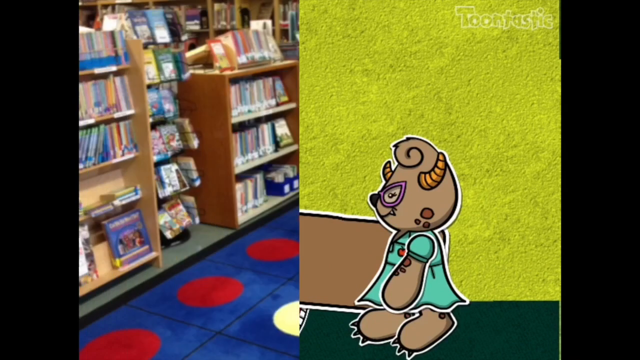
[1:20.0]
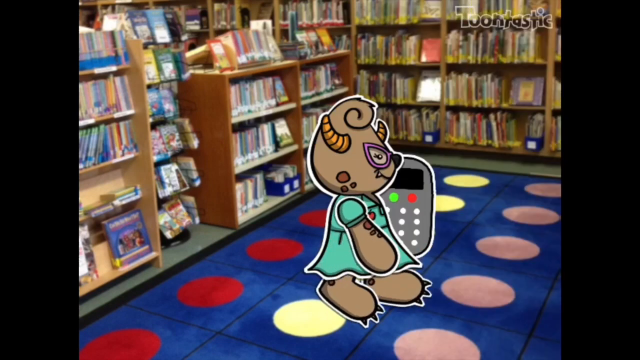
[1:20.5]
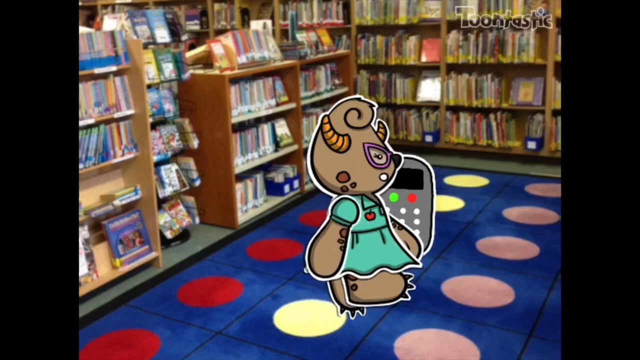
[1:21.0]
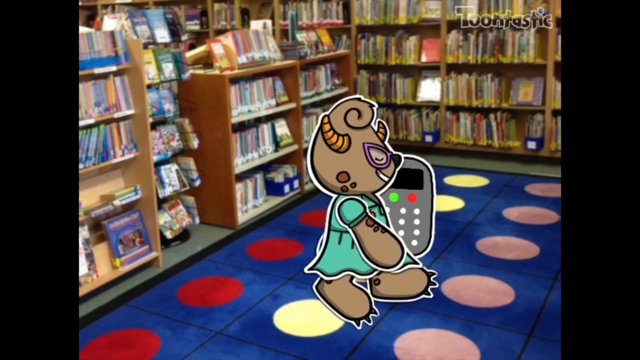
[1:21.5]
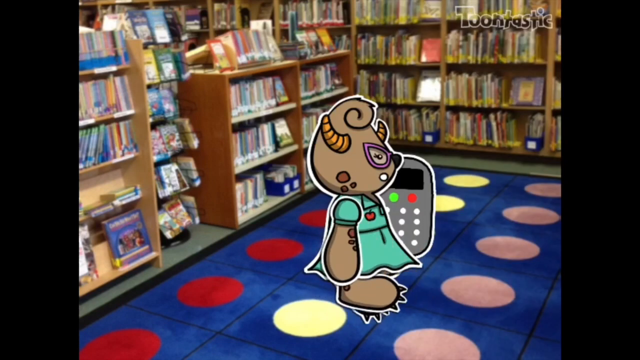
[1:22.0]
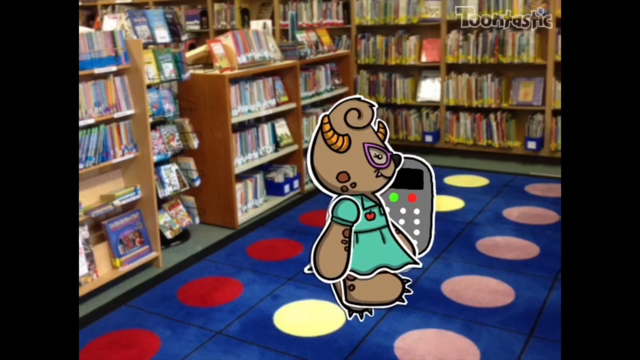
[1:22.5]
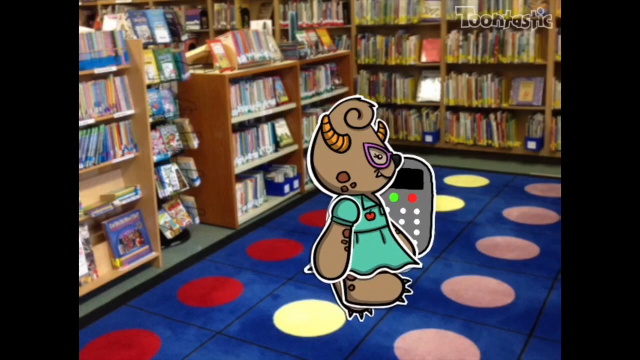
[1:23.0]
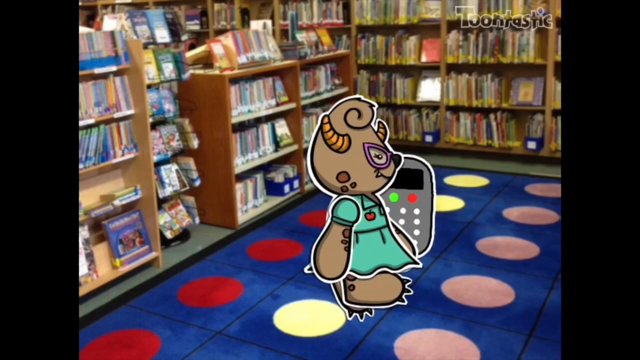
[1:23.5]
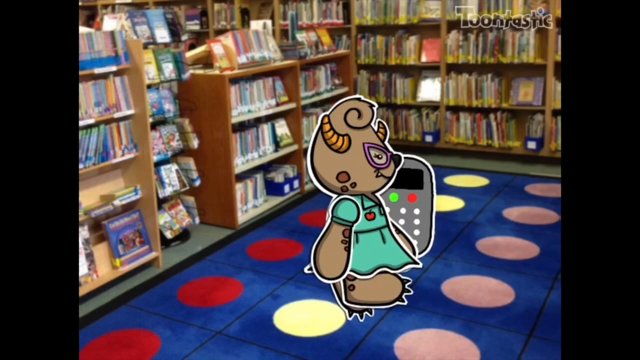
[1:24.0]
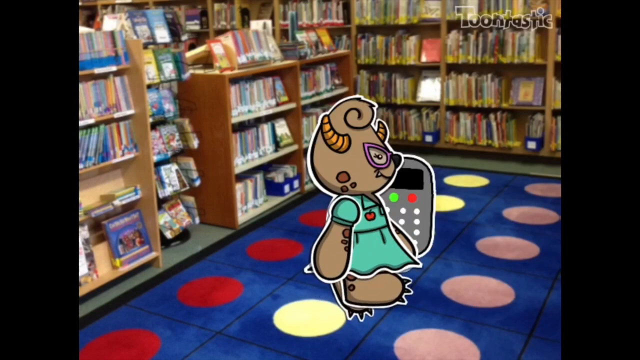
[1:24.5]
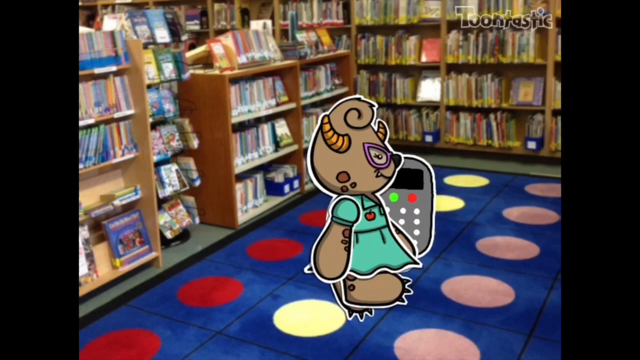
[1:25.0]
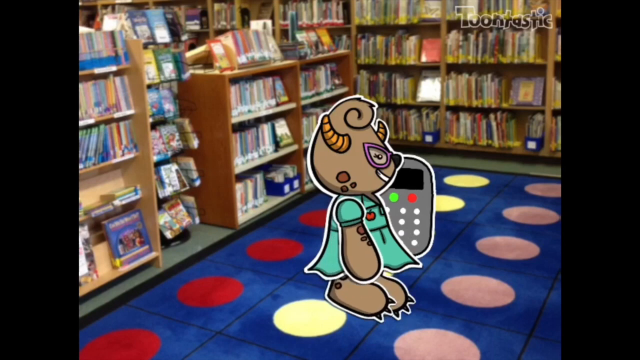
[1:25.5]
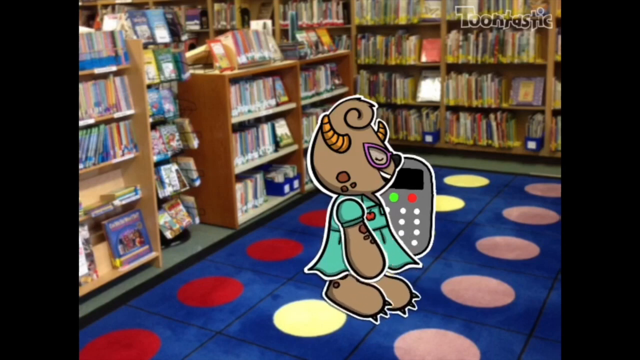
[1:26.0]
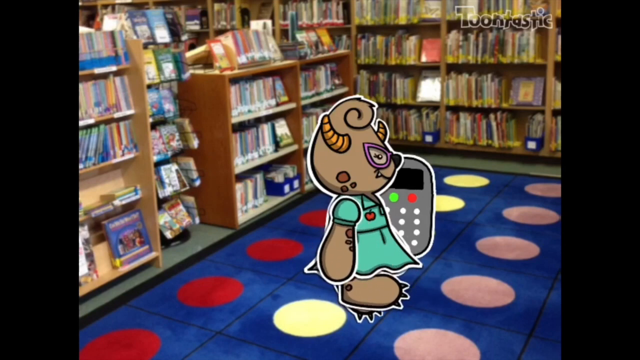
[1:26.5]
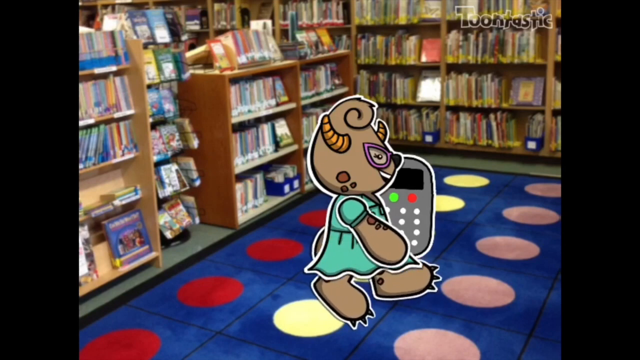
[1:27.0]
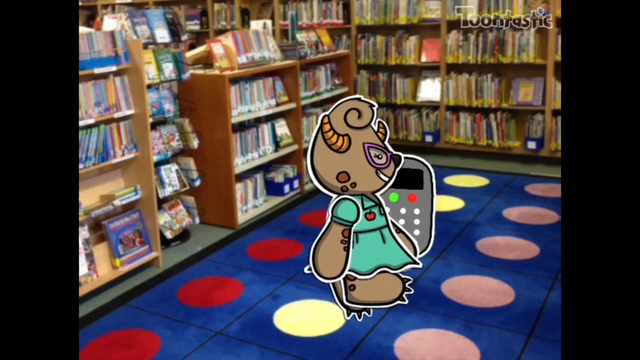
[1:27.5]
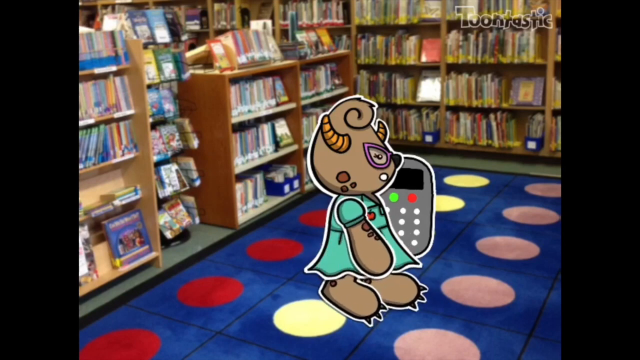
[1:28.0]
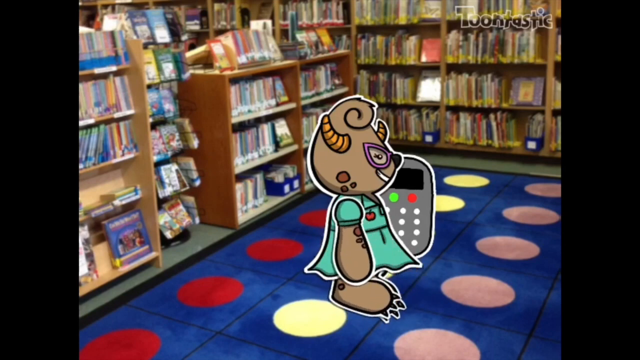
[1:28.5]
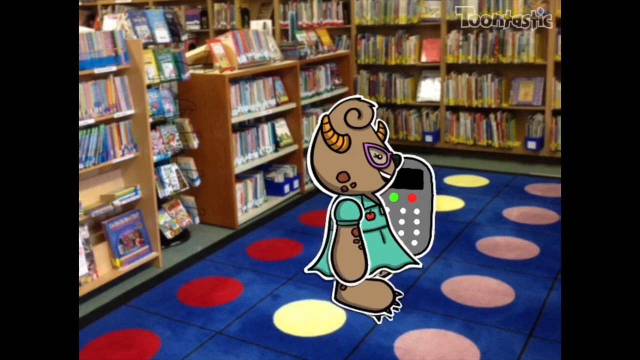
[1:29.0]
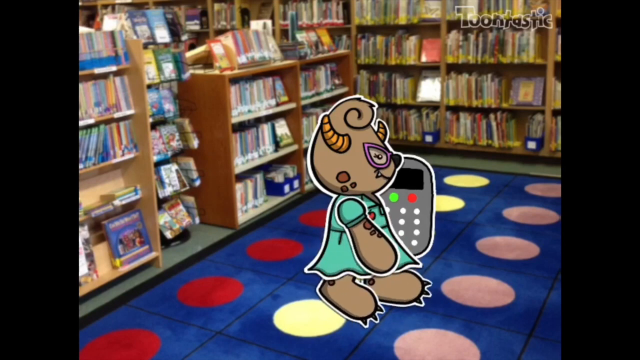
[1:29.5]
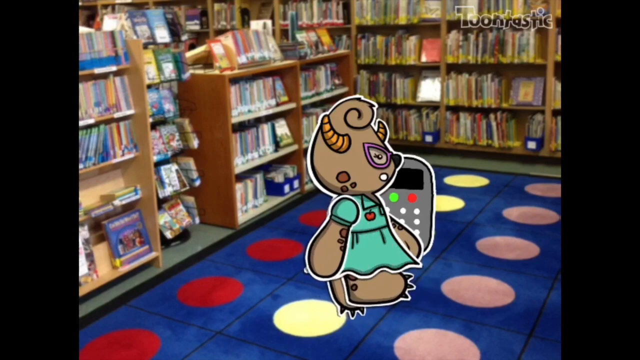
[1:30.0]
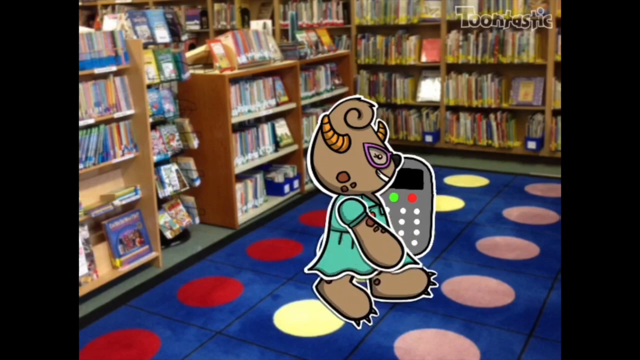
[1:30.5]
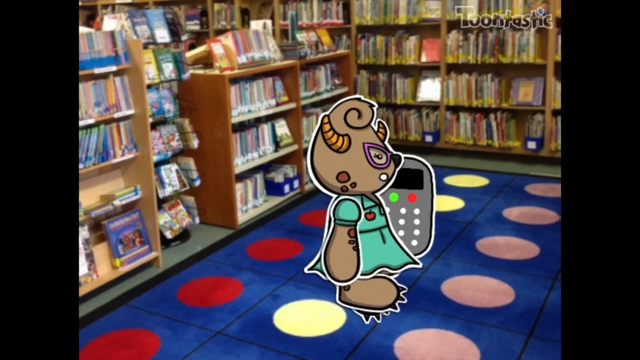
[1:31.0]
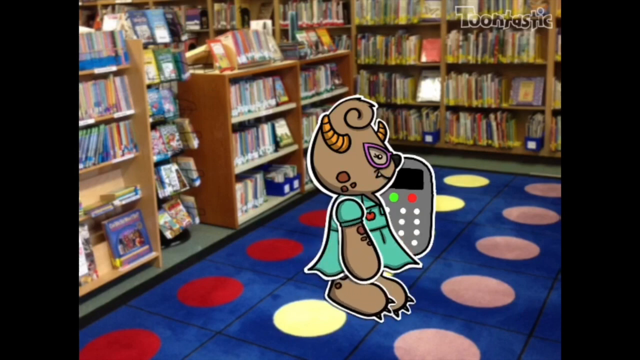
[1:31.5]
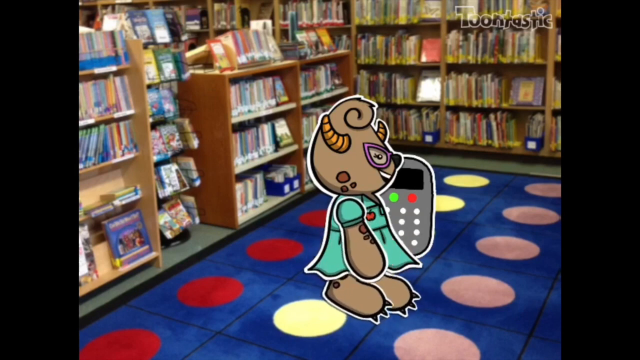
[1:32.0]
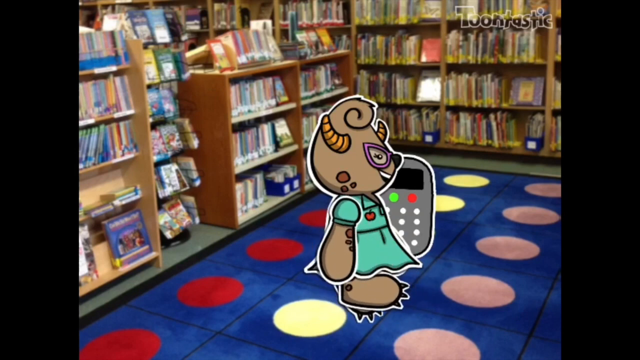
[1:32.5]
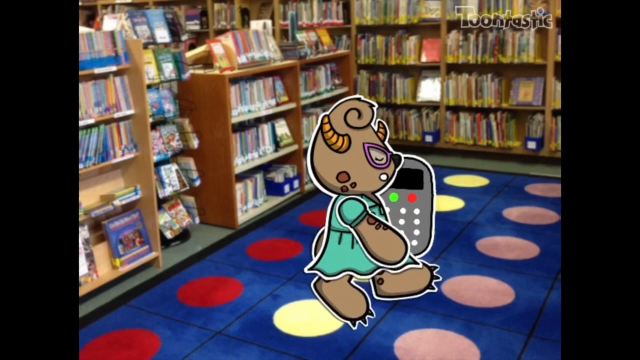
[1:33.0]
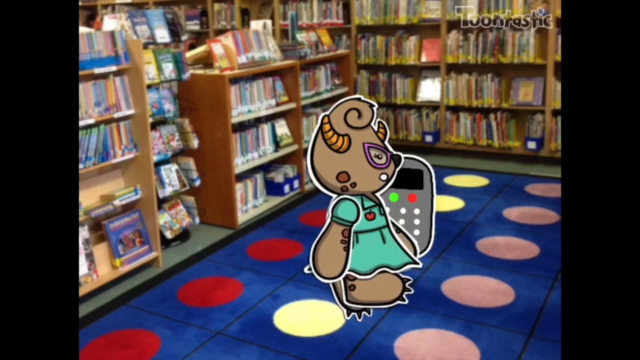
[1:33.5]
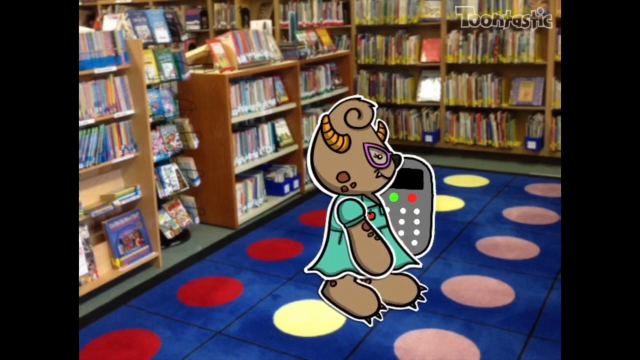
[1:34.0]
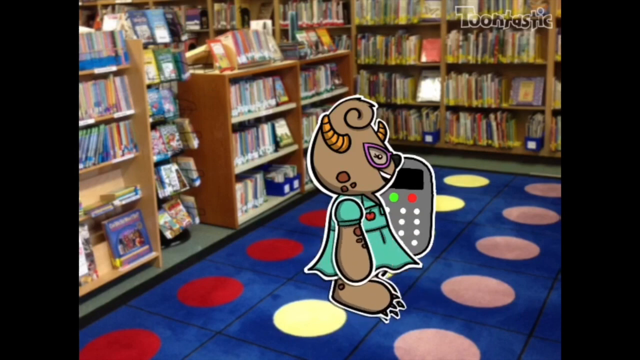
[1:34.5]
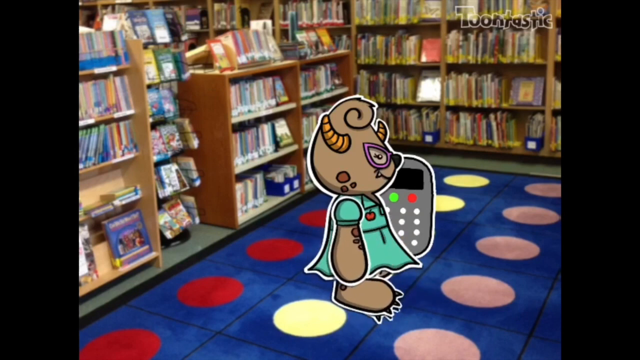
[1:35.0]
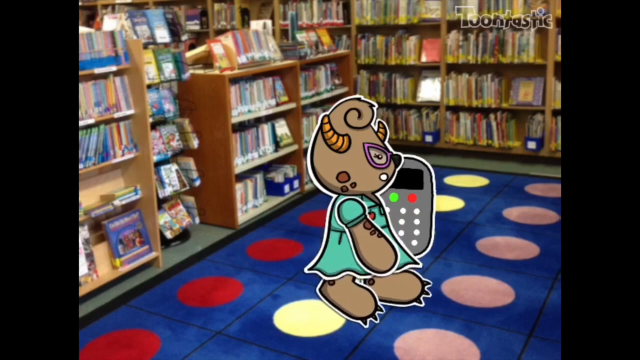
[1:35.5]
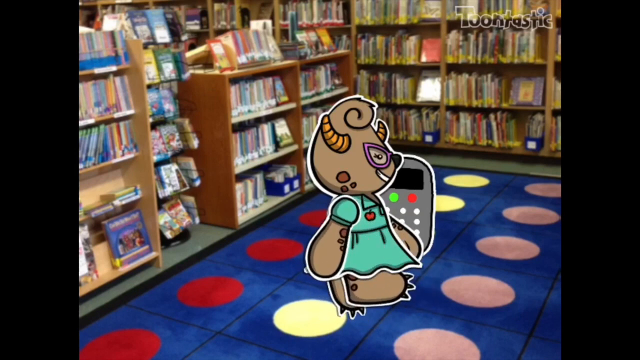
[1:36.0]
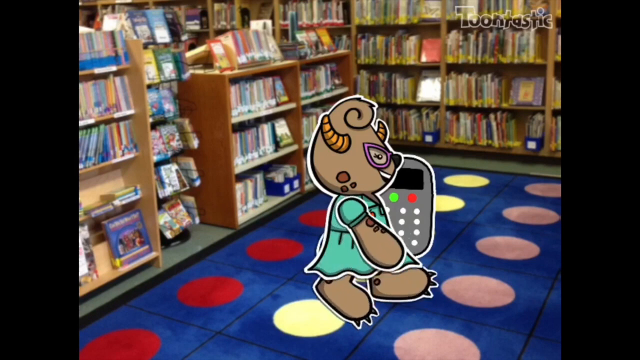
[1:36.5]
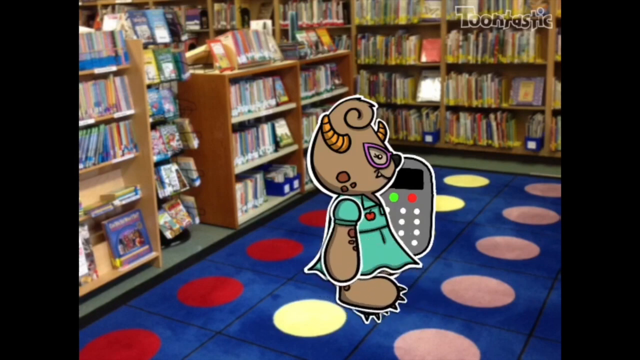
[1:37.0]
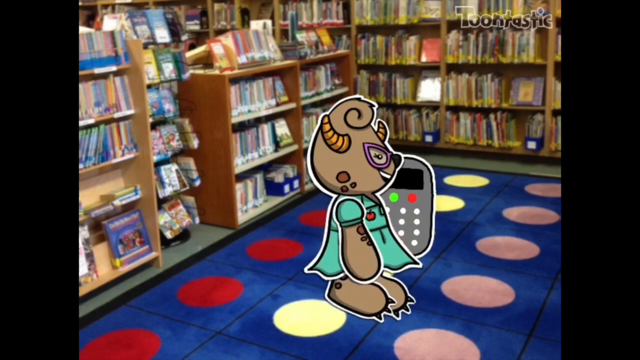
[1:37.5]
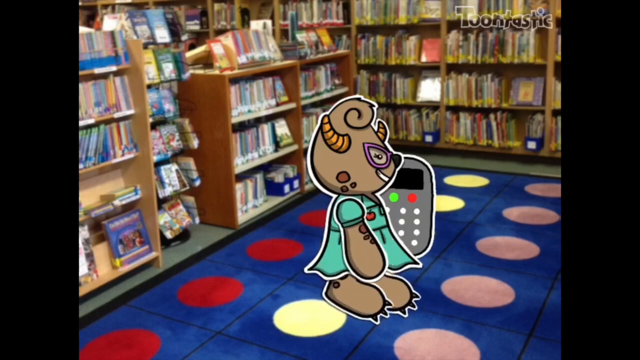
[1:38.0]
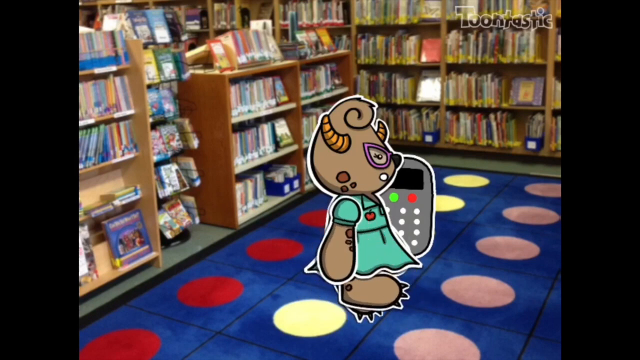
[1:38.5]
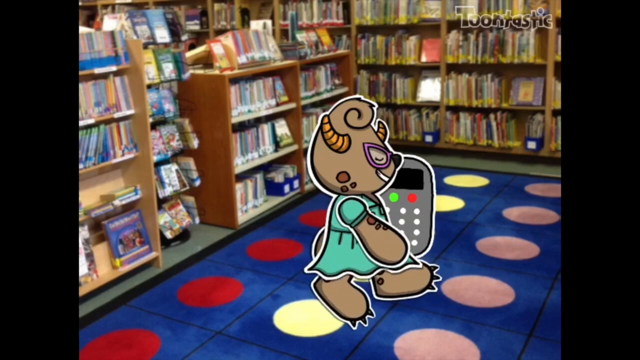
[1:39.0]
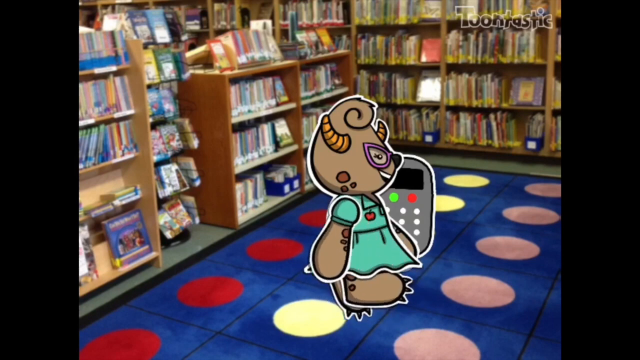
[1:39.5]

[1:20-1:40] The elephant-like animated girl is in the bookstore, talking on something like a telephone. The room has many books that look real rather than animated, neatly arranged on different shelves, and different areas of the rooms are filled with different types of books. The carpet on the floor is blue with dots of red, yellow and peach. The animated girl is also seen outside the library, conversing with the other animated girl where they are trying to rescue the boy. The elephant-headed girl apparently calls for help to rescue their friend.